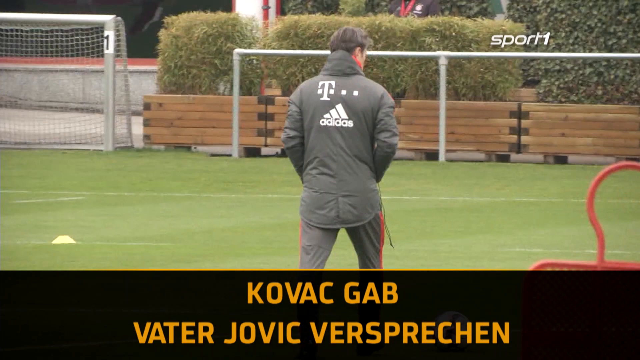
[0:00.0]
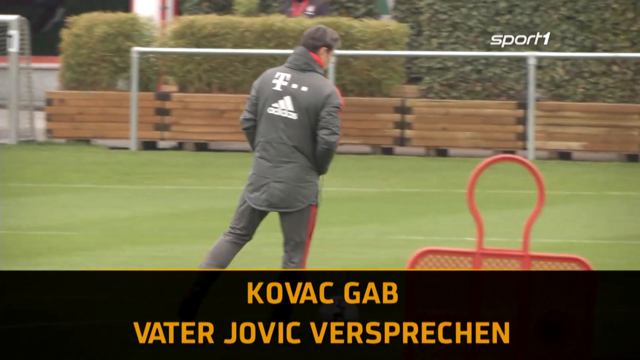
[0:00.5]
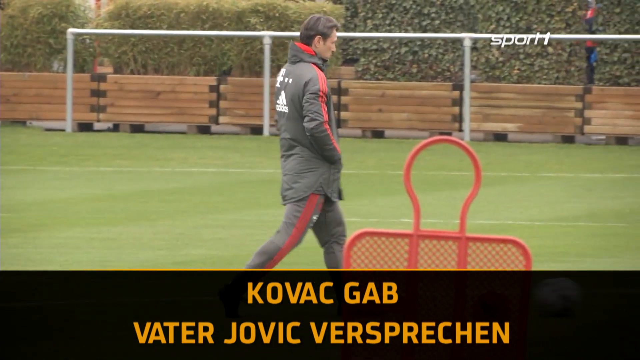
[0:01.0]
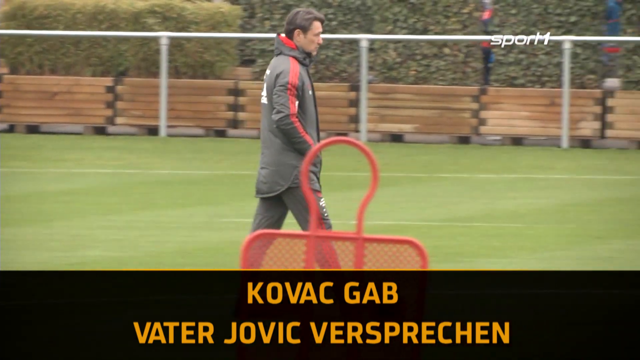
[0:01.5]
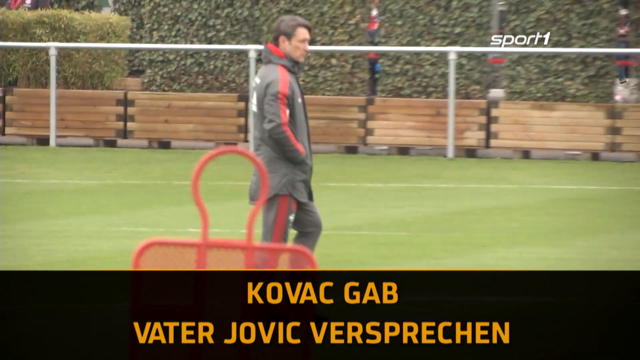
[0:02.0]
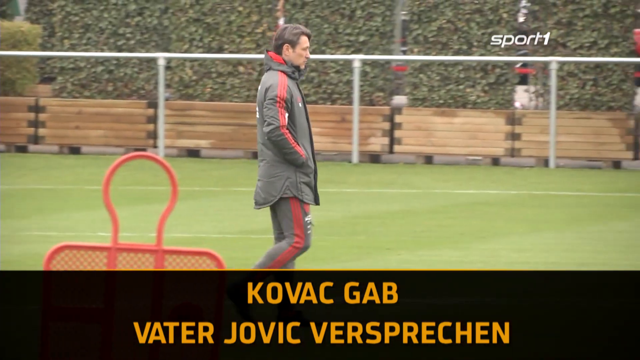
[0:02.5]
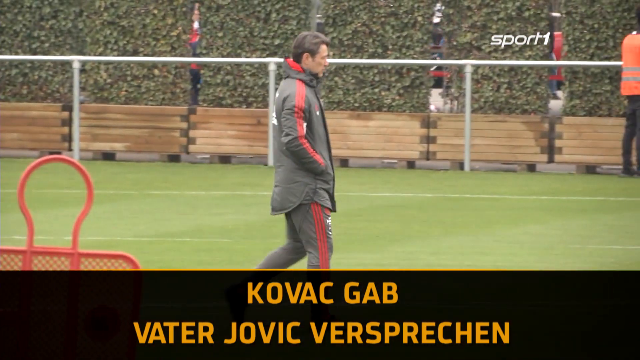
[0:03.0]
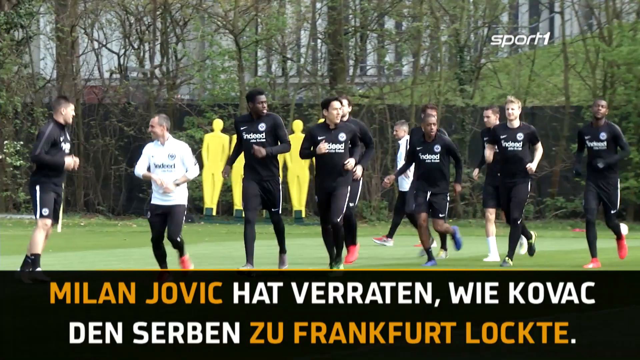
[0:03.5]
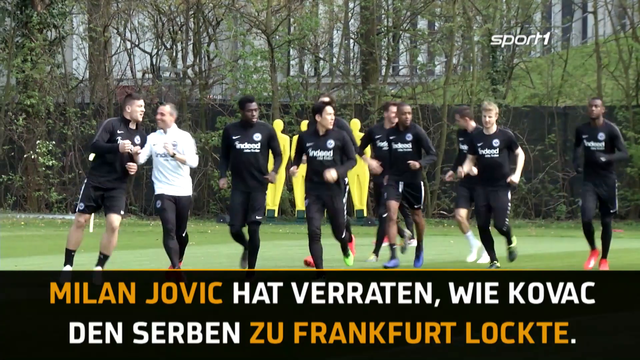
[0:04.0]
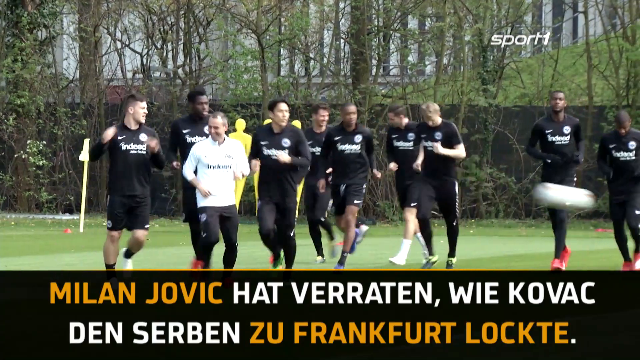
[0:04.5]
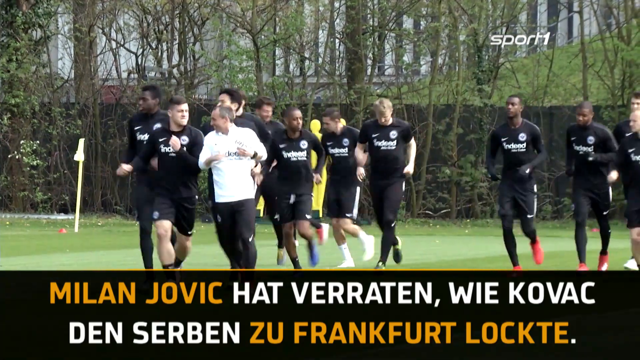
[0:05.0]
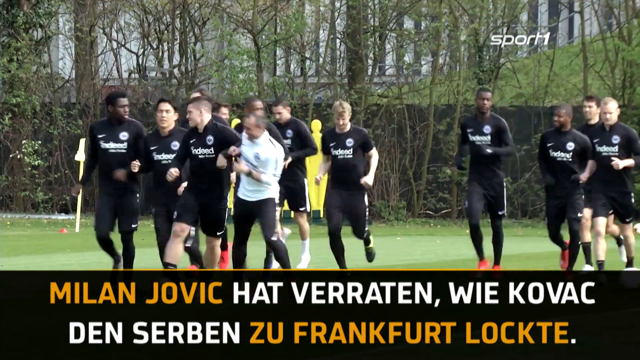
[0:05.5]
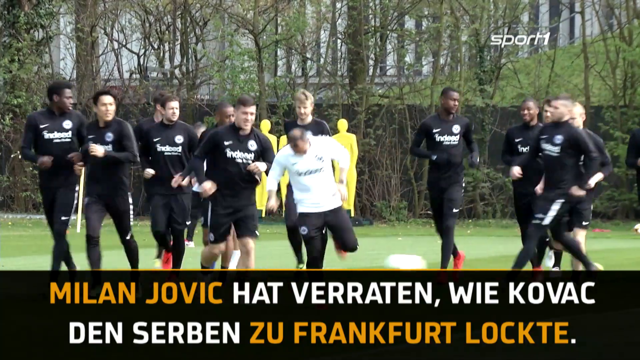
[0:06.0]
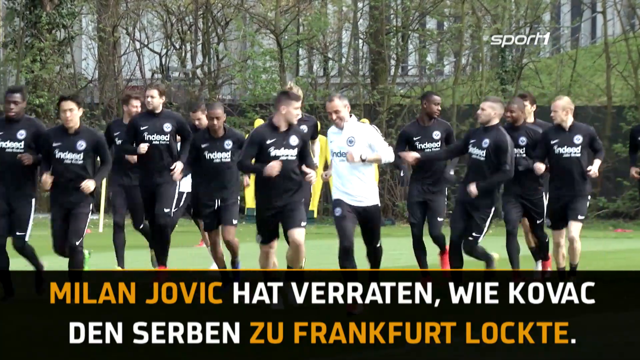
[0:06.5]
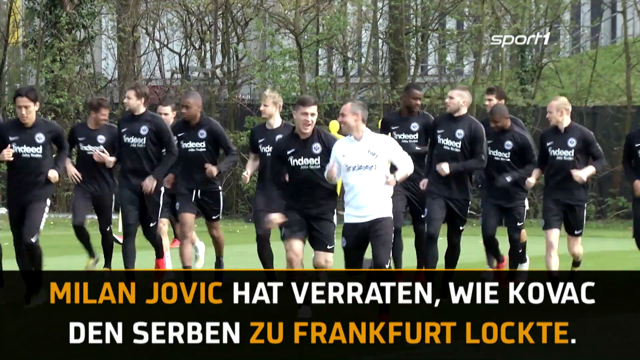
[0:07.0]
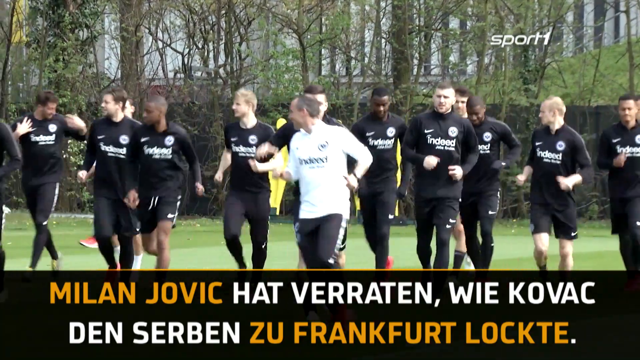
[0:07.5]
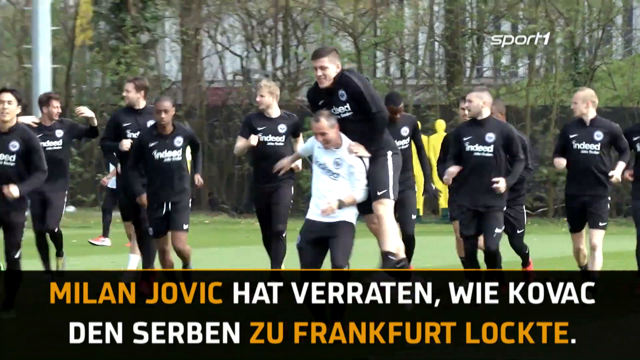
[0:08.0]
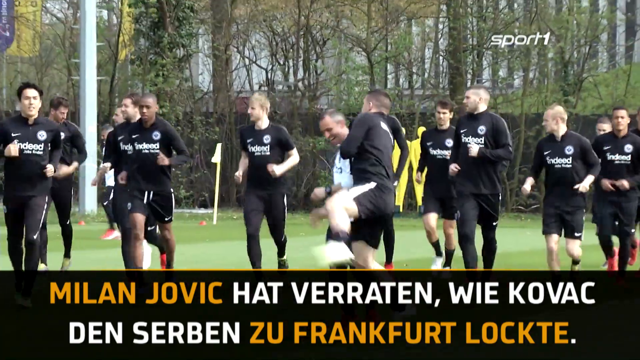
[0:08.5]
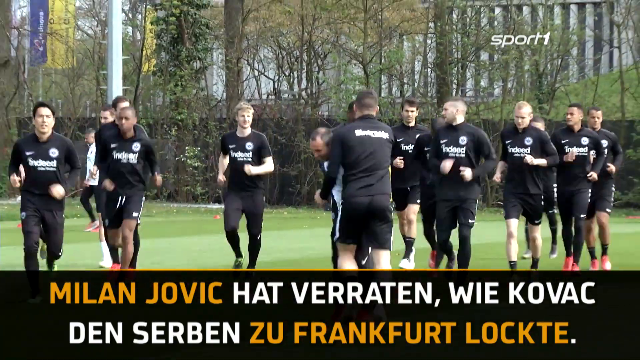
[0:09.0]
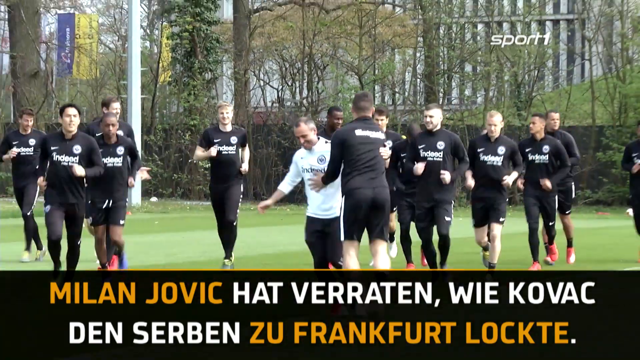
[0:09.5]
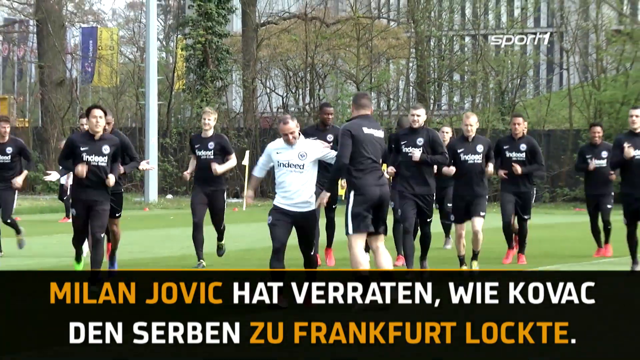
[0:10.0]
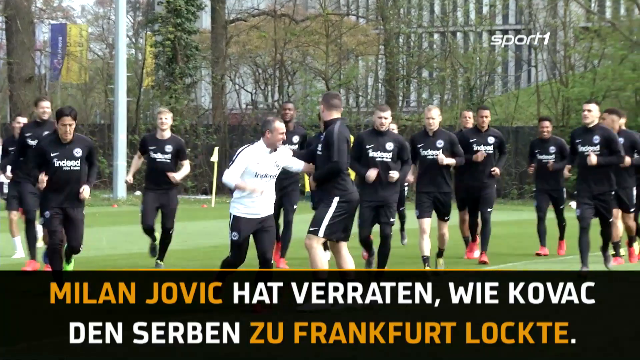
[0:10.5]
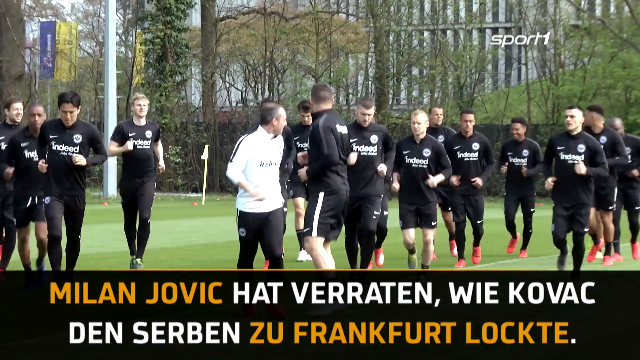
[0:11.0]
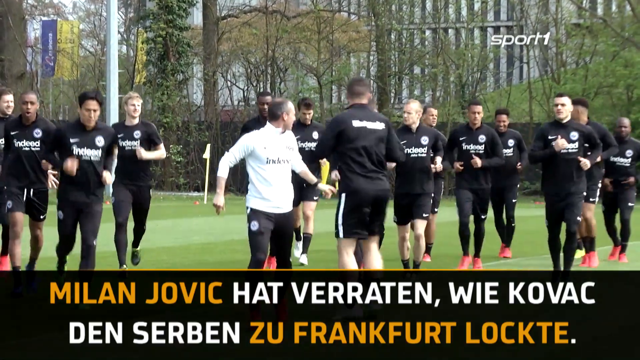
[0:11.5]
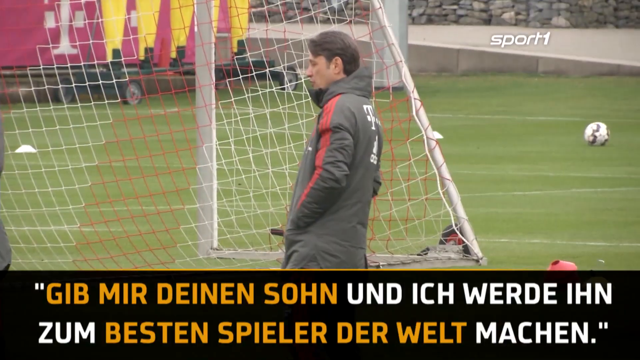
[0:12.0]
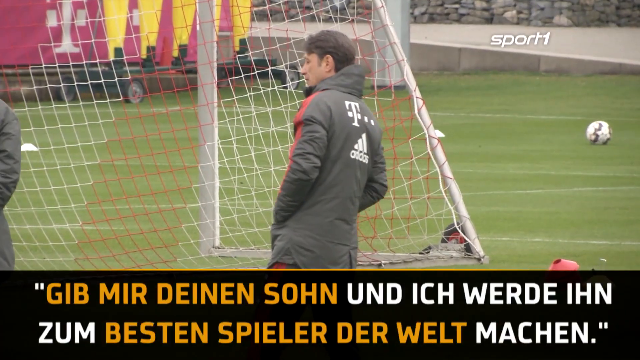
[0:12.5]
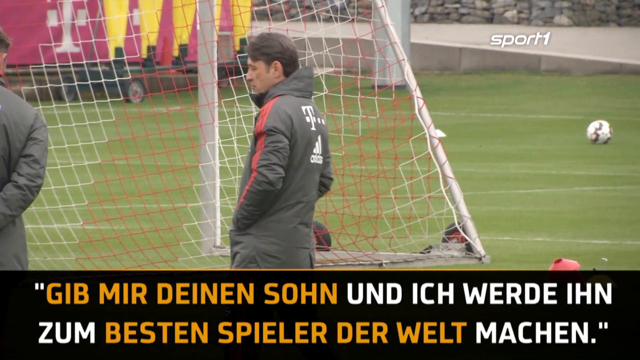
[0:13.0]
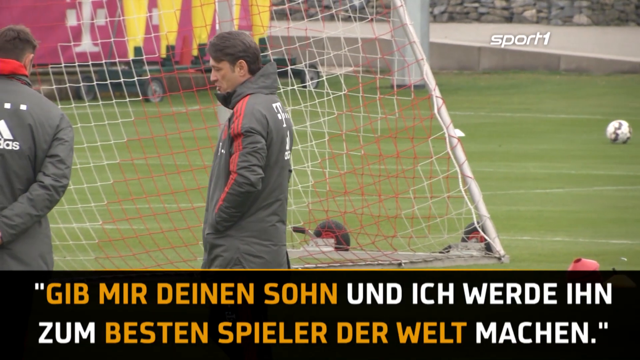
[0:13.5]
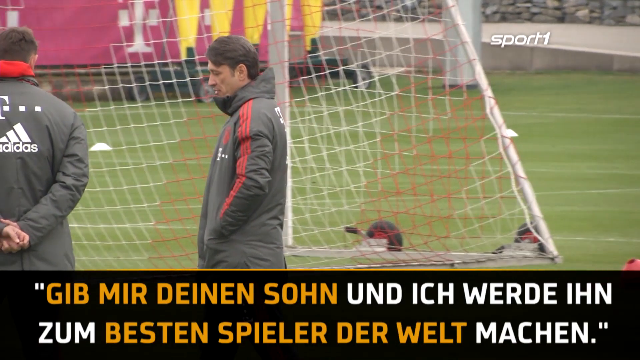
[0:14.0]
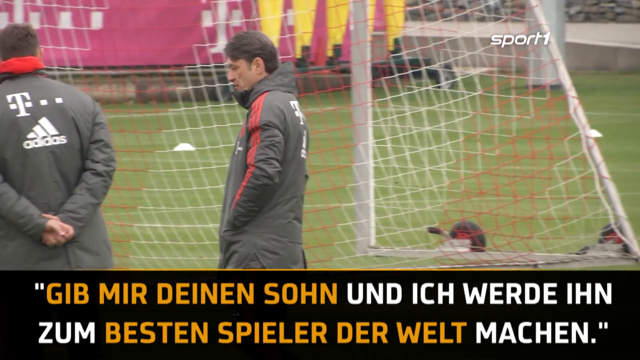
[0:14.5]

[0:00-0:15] A soccer team runs around on a field. First, one person apart from the group is shown, possibly a coach, a manager, or an injured player, since they are not taking part in the running that the rest of the team is doing. This person wears a gray coat and gray sweatpants with red stripes down the sleeves and legs, and is sort of milling about. The rest of the team is a large group of men jogging on the field in black shirts, either black shorts or pants, and bright cleats of different colors. They all seem to be smiling and having a good time. A black box at the bottom contains white and orange text that looks like it may be German or a related language.